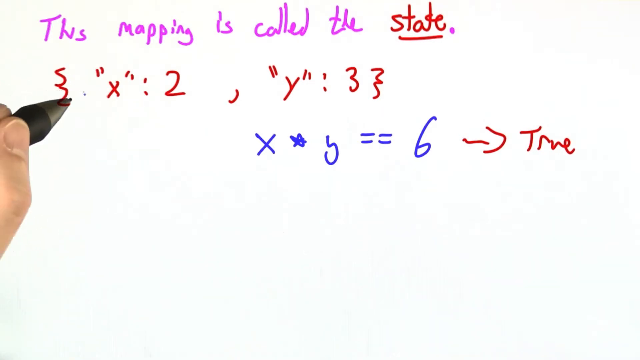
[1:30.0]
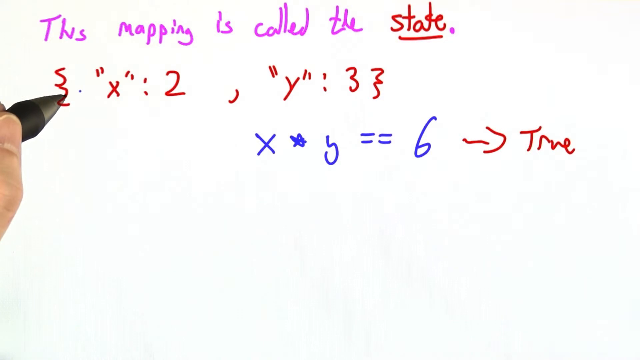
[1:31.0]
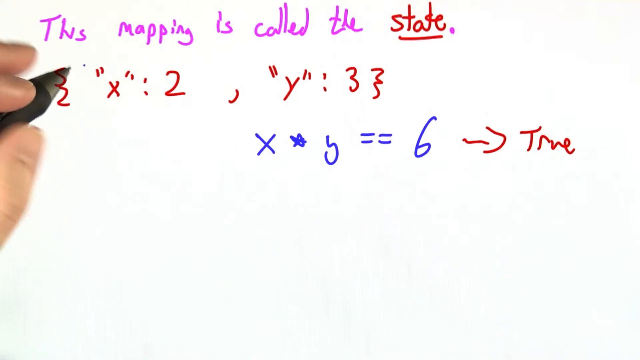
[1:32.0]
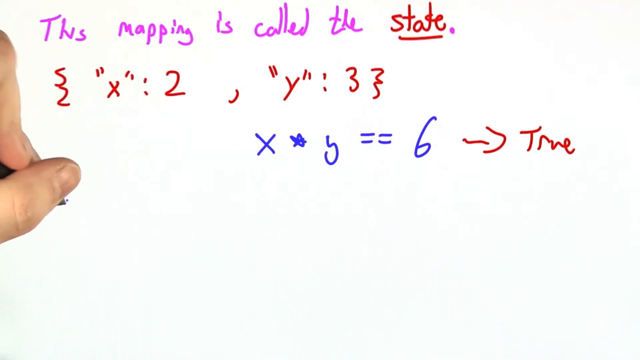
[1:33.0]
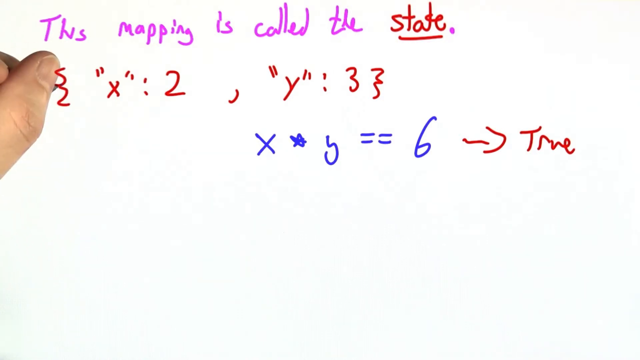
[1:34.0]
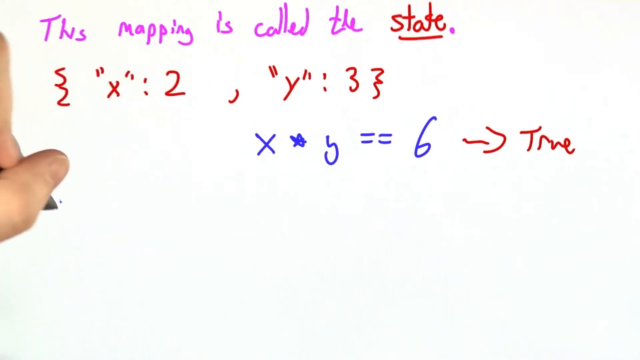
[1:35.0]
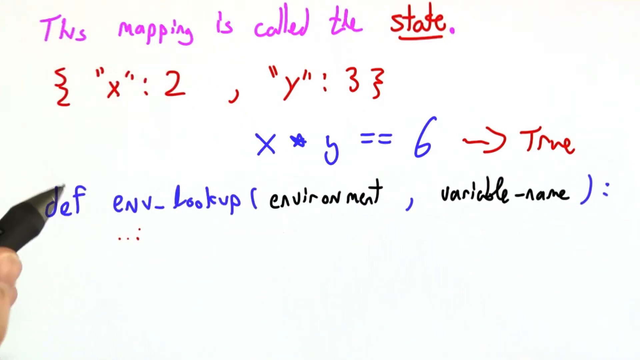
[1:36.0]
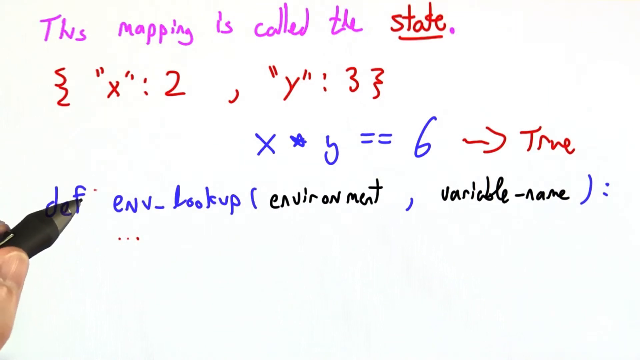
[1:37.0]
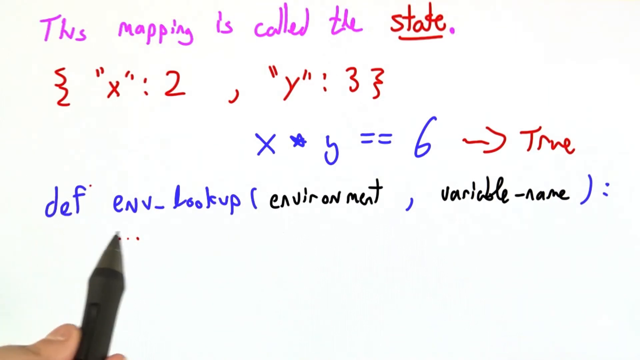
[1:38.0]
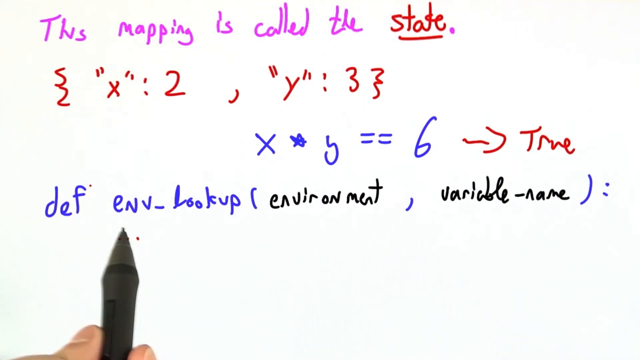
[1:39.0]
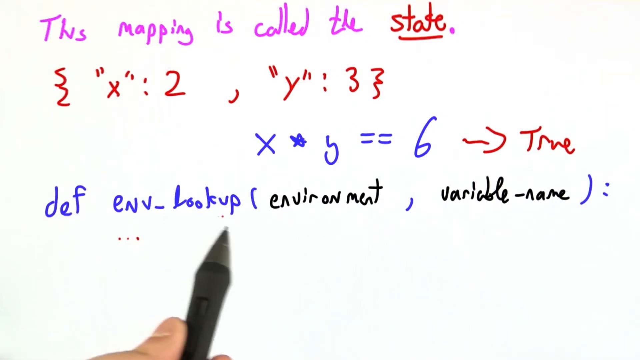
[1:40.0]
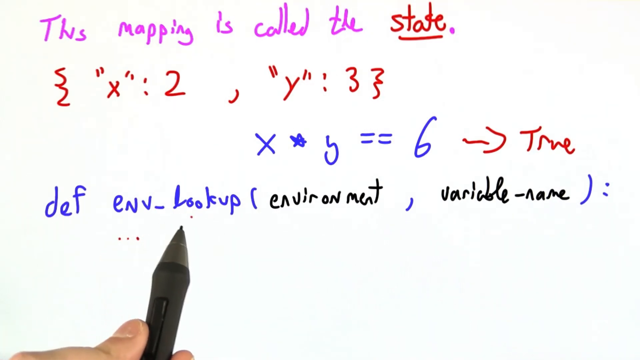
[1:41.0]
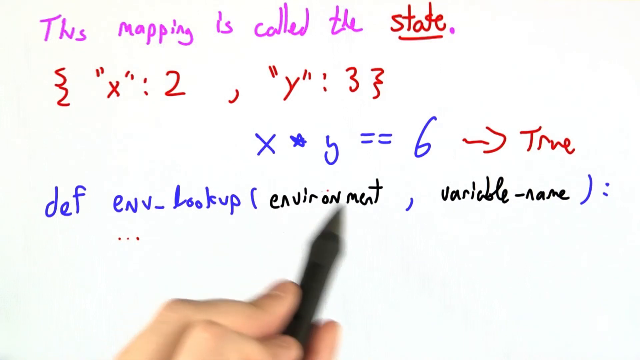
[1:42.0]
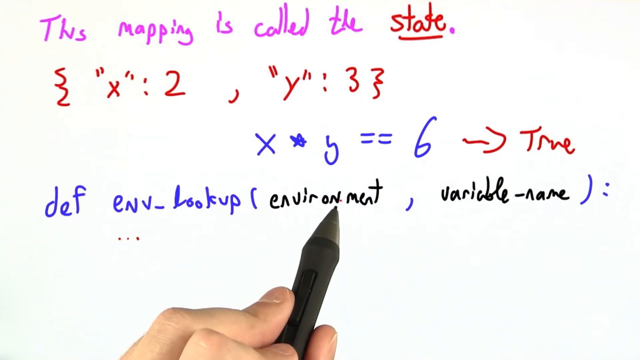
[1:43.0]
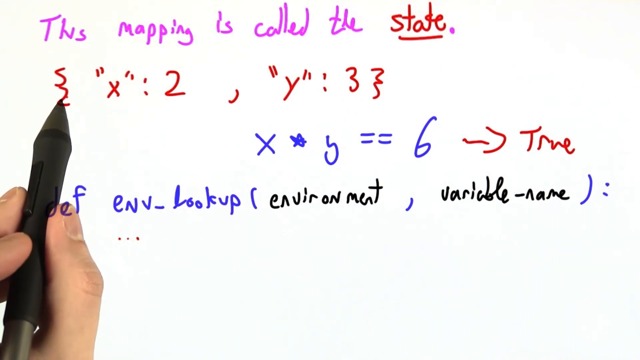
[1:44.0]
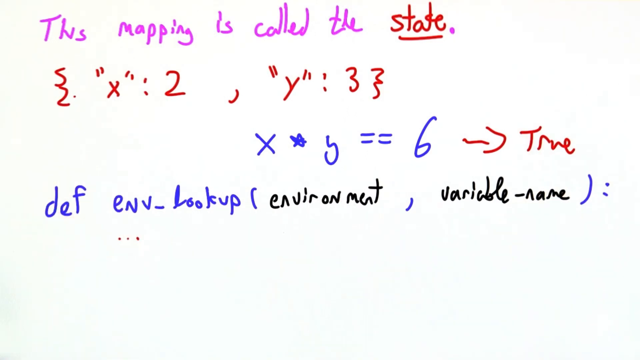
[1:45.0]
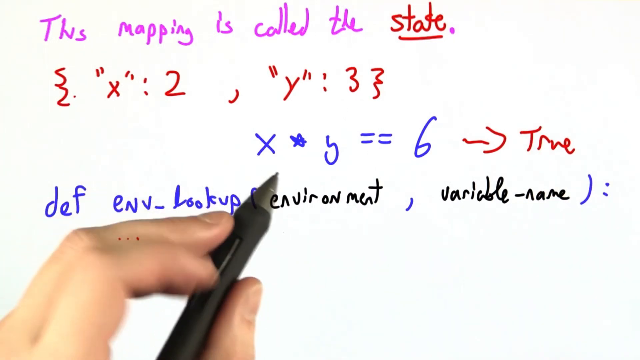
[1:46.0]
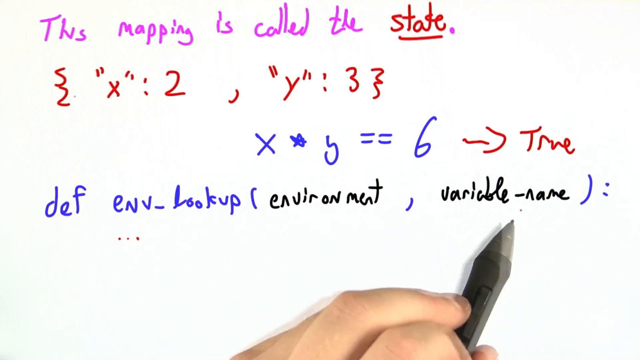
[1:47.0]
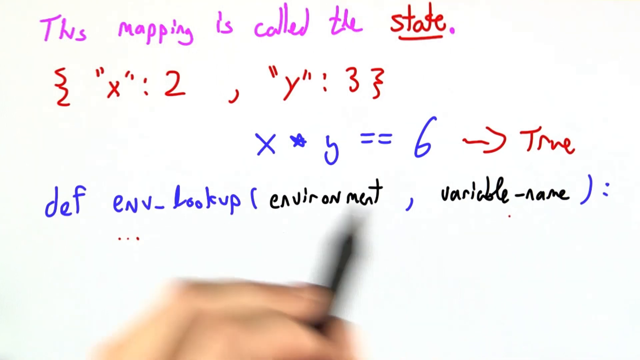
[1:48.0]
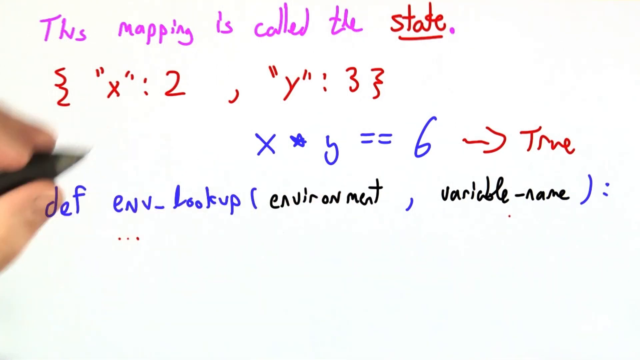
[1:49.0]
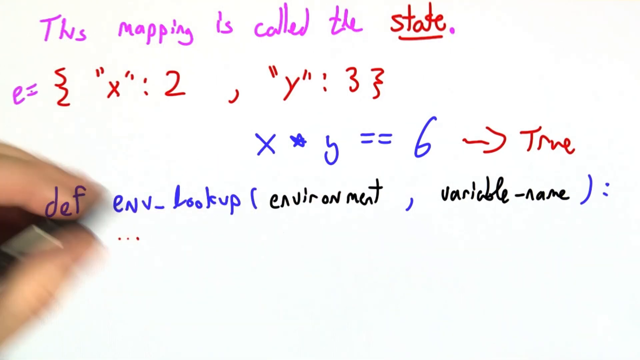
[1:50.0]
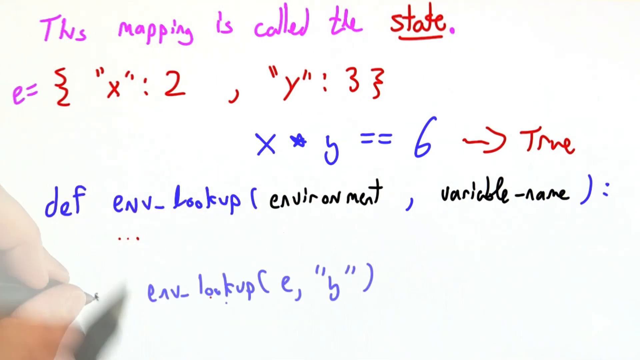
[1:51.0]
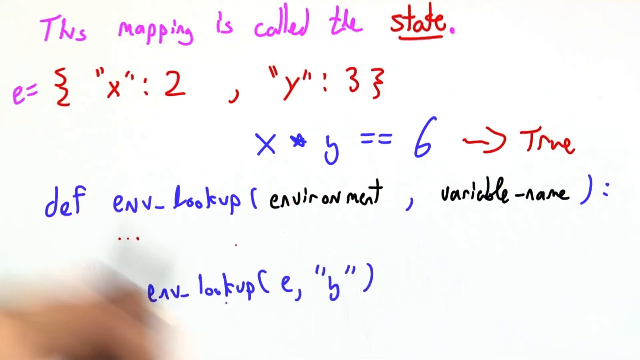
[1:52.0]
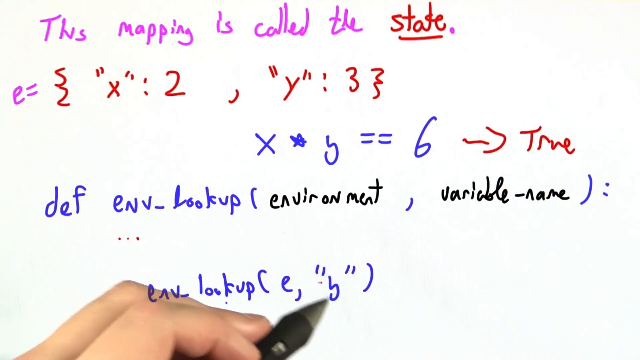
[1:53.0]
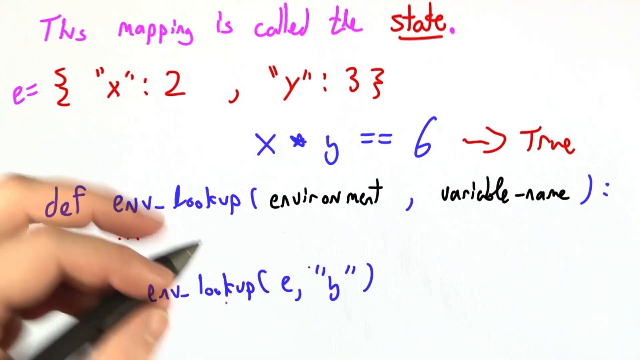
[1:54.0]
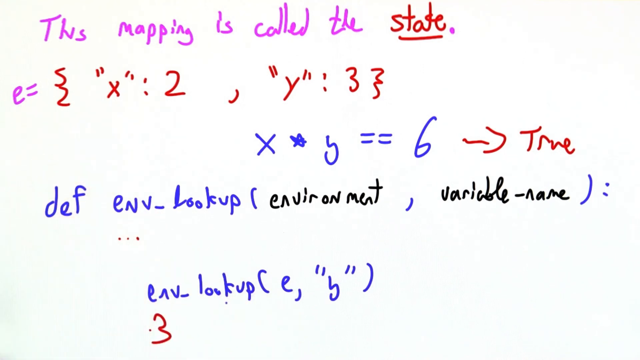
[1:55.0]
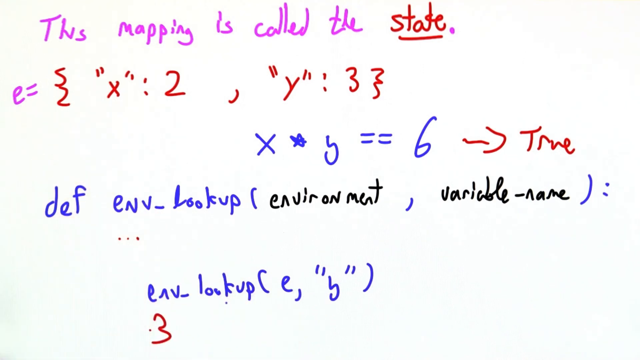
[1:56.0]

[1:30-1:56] The person keeps pointing to establish the relation between the two equations and the multiplication written beneath them. They then write what seems to be a string of code, reading "def" and "lookup", with the words "environment" and "variable name" in brackets. The video ends there.